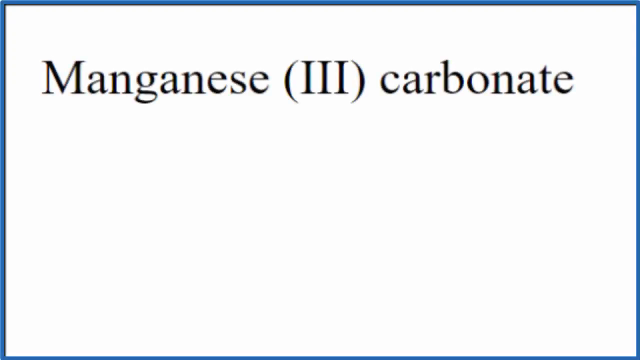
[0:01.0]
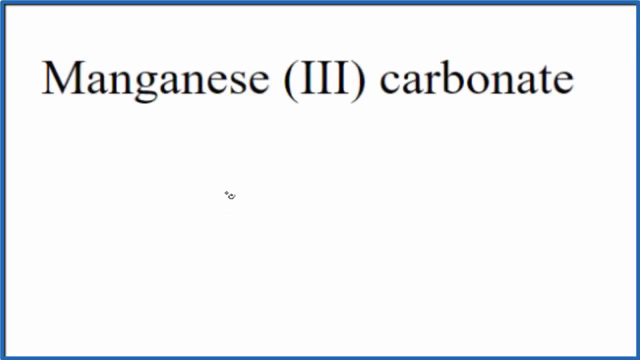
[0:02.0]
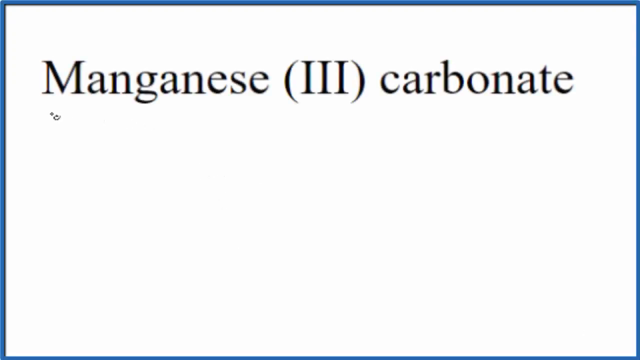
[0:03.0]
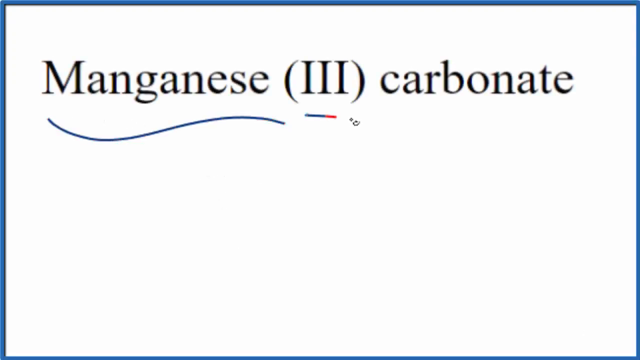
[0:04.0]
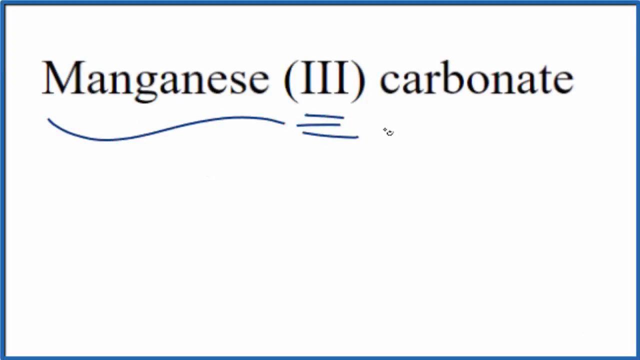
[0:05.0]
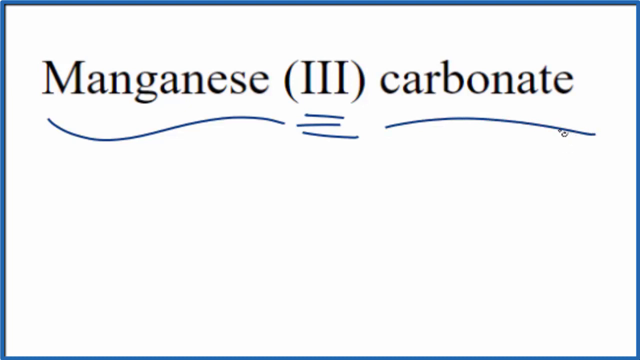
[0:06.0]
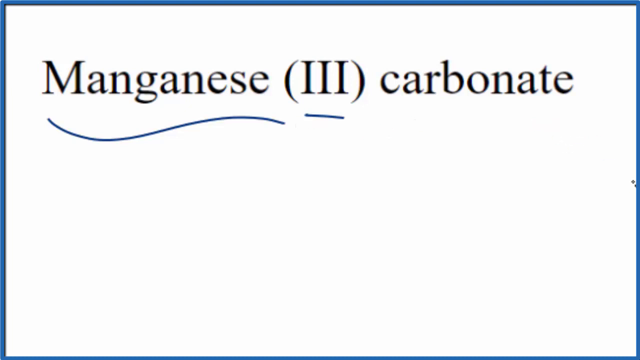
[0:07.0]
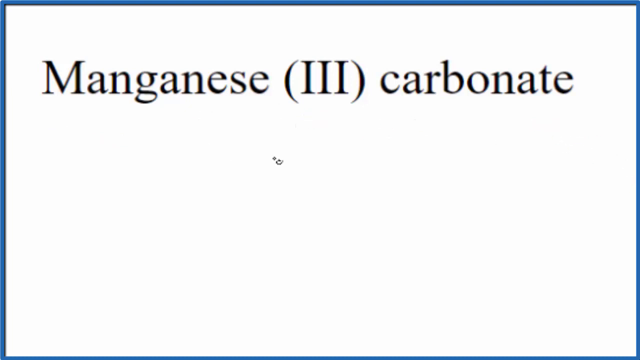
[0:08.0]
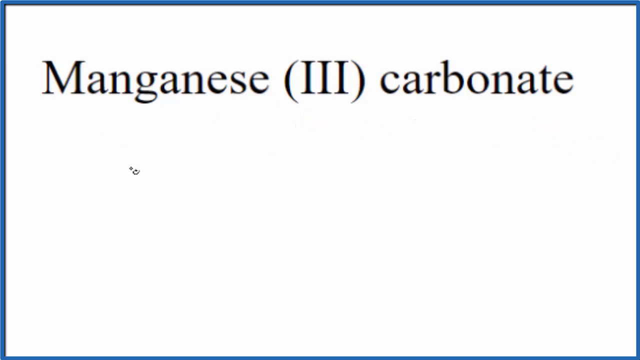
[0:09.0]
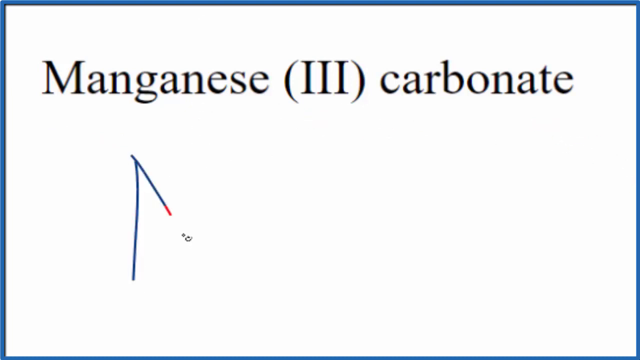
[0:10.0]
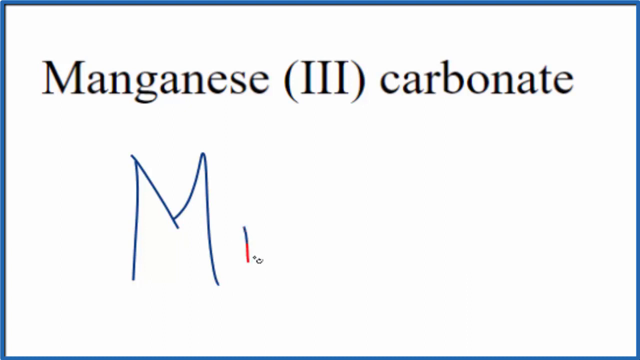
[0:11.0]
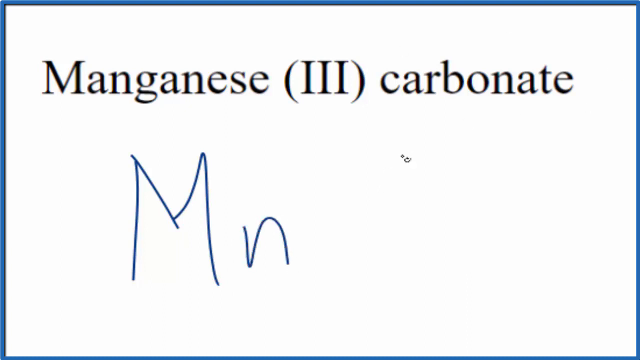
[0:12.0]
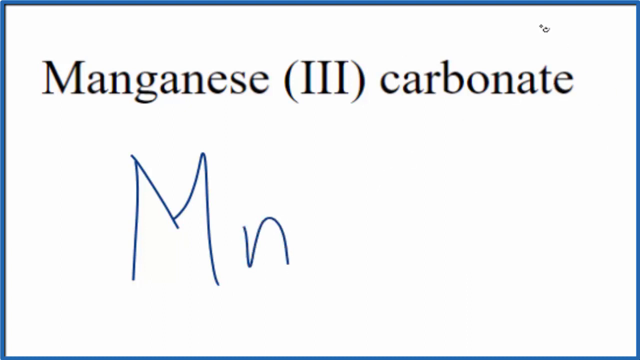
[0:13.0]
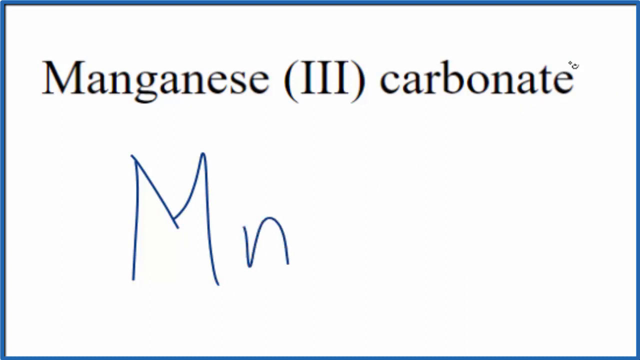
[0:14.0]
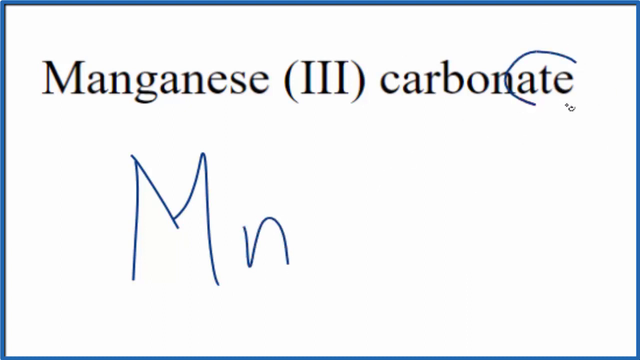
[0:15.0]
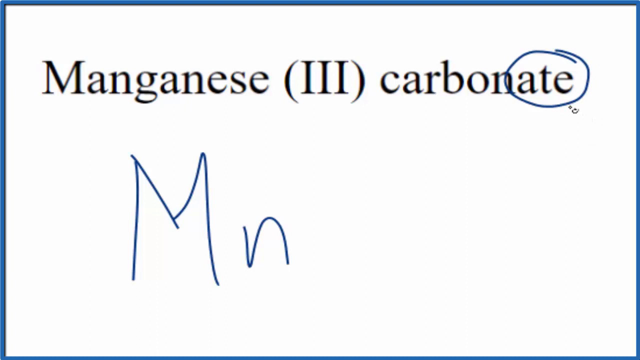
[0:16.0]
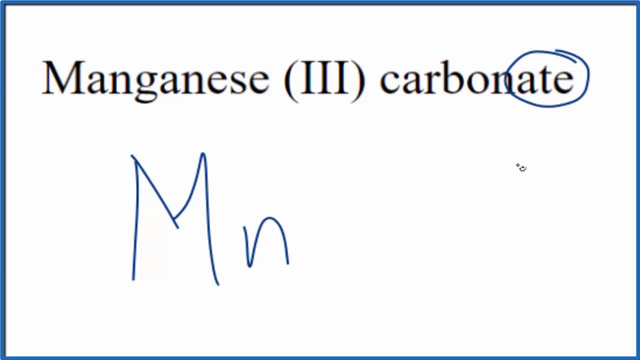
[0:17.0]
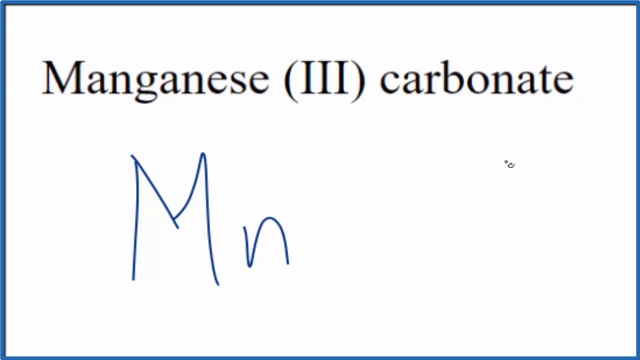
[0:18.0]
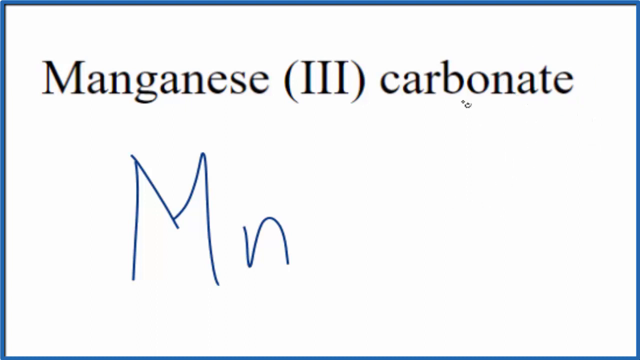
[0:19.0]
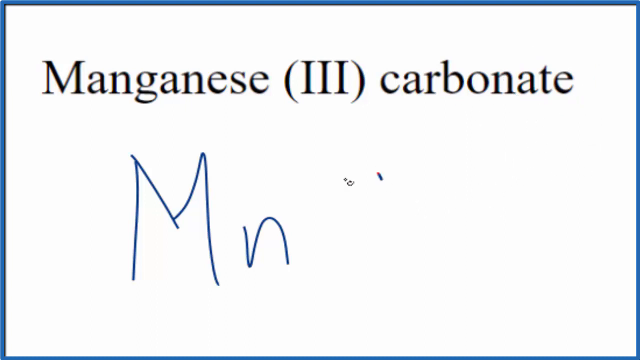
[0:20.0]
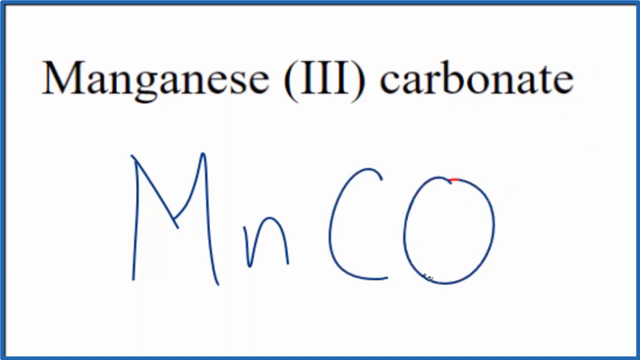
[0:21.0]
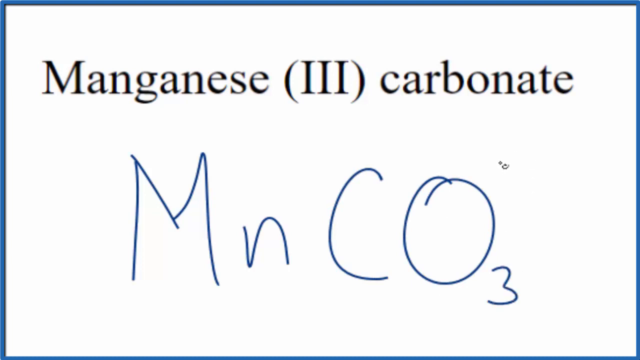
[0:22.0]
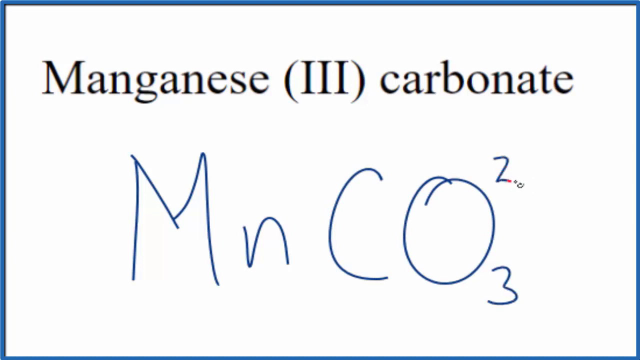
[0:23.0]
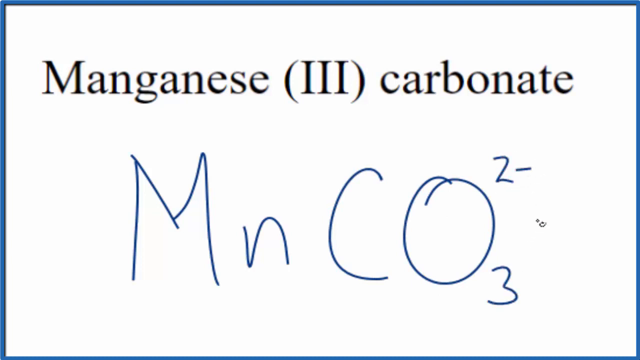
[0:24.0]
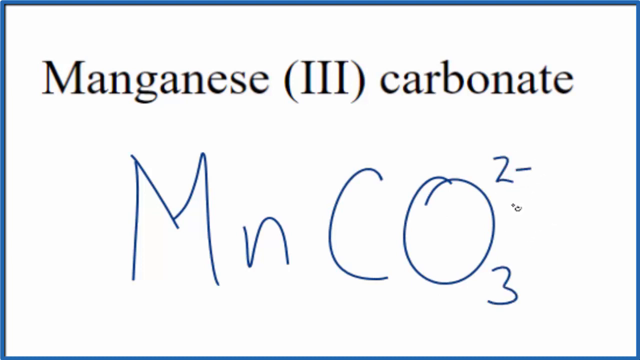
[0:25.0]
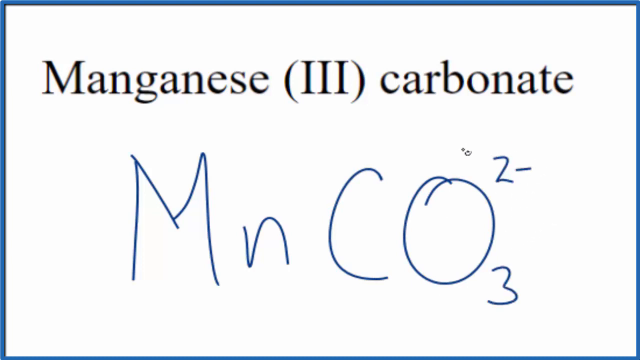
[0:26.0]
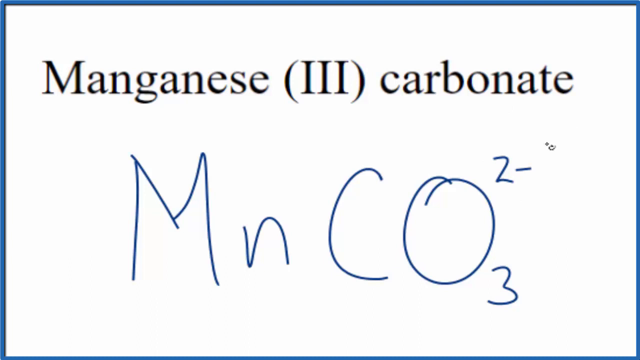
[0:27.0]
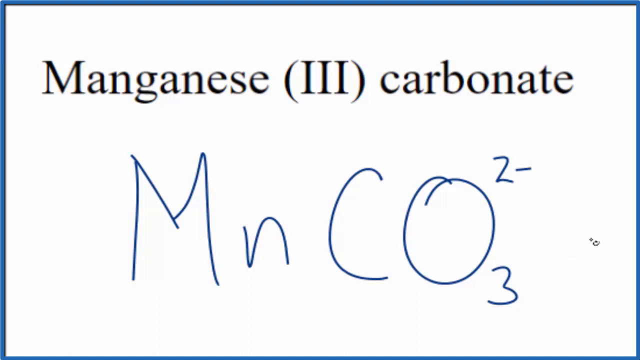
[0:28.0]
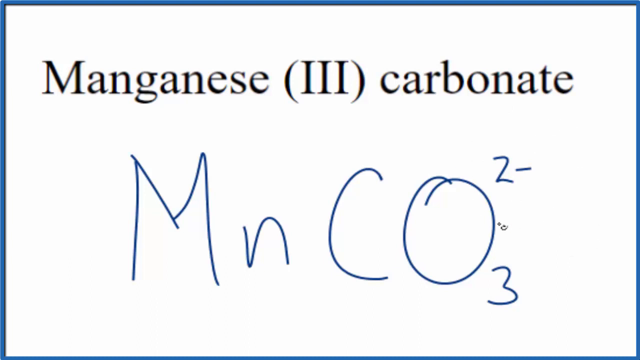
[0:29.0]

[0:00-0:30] Against a white background, black text appears that reads "manganese (III) carbonate." A mouse pointer is used to draw on the screen: a squiggly line under "manganese," three lines on top of each other under the Roman numerals, and a squiggly line under "carbonate" that is half bluish-black and half red. The lines are deleted, and the pointer draws the letters M and n, with the M capitalized and the n lowercase. It then circles the "ate" in "carbonate" and writes a capital C and a capital O, with a 3 under the O. A 2 minus is then put on top of the O. The pointer keeps moving all around the screen. Anything drawn first appears red and turns black when the mouse is released.